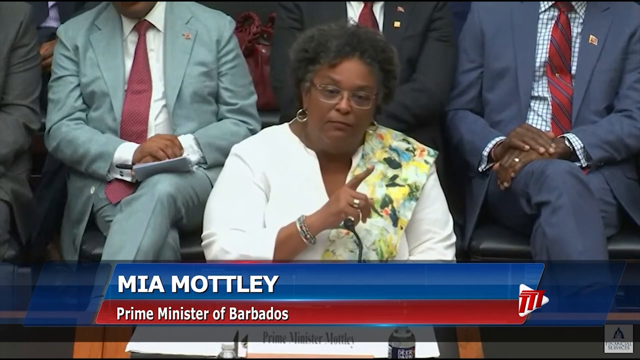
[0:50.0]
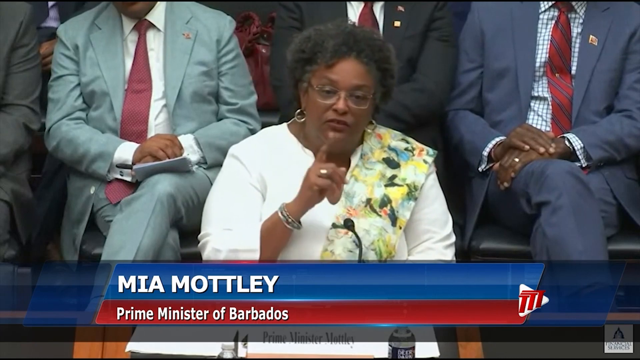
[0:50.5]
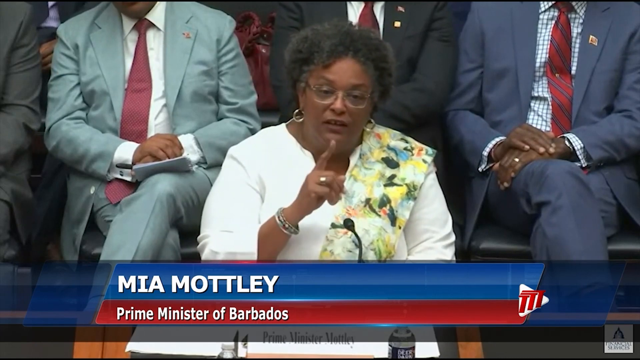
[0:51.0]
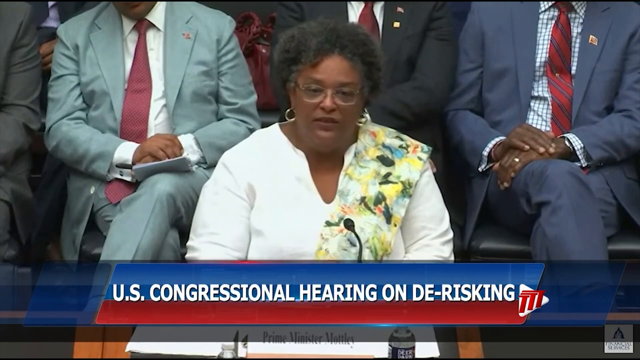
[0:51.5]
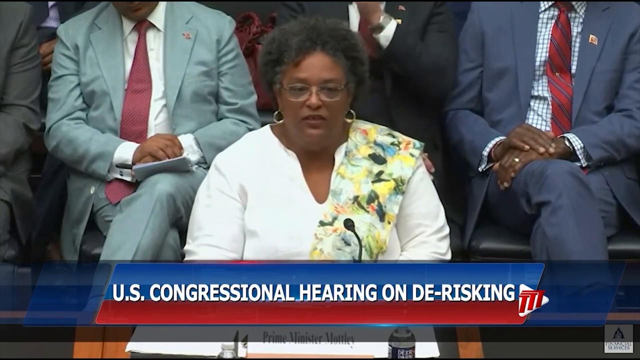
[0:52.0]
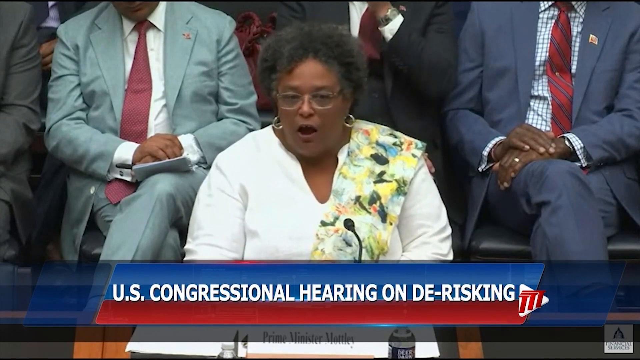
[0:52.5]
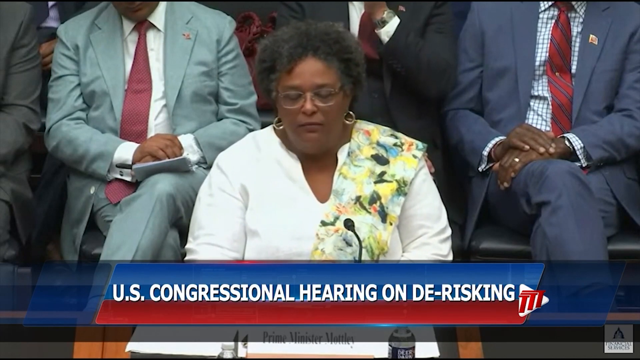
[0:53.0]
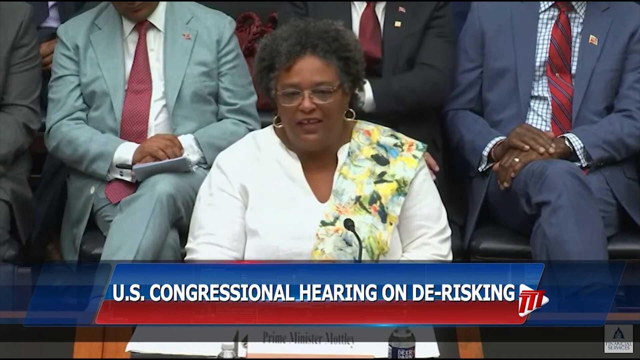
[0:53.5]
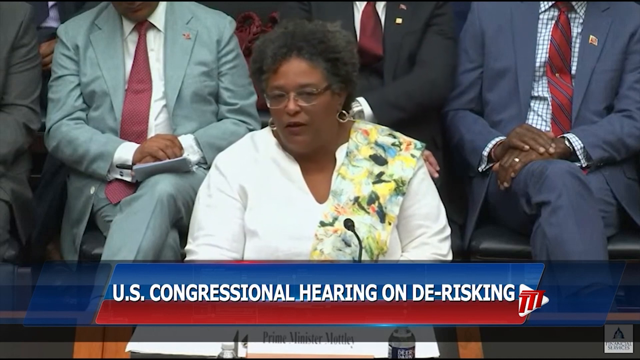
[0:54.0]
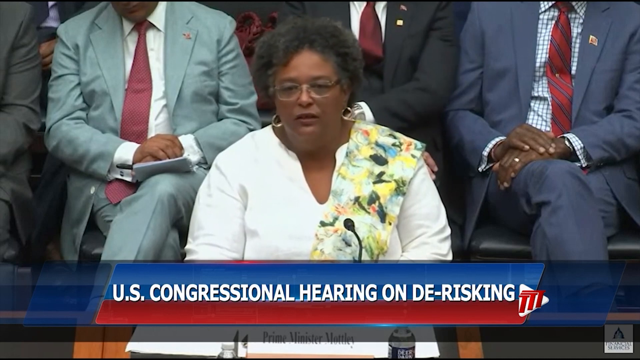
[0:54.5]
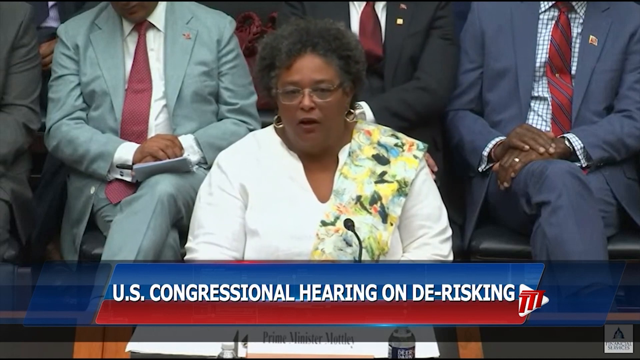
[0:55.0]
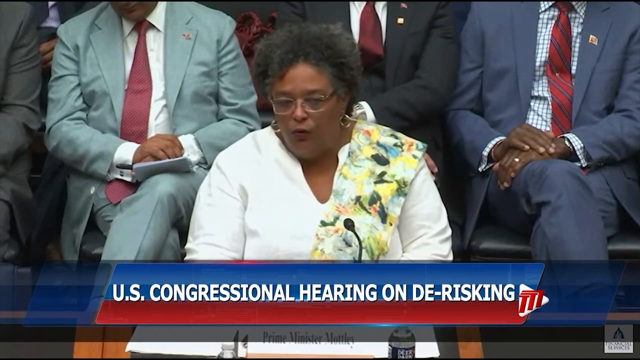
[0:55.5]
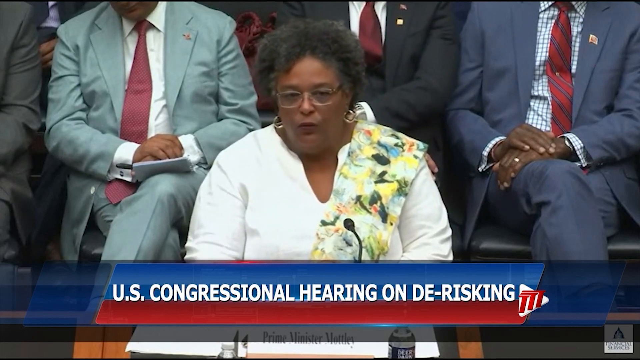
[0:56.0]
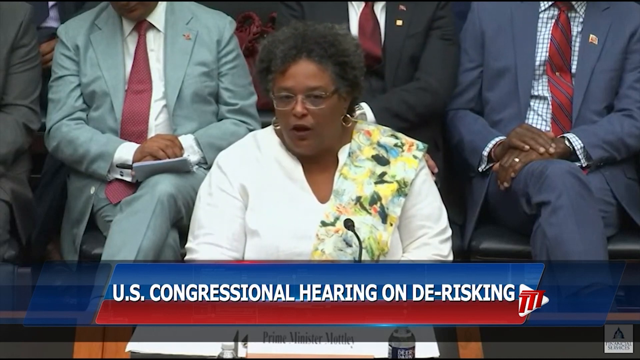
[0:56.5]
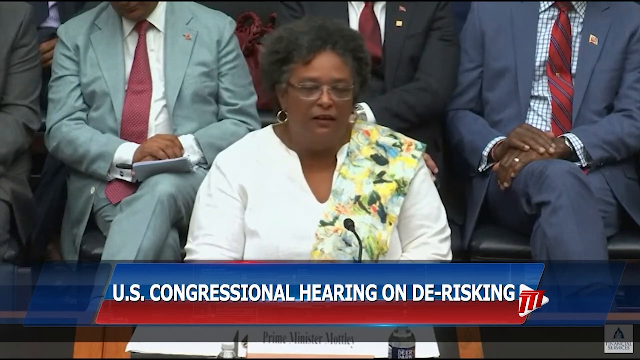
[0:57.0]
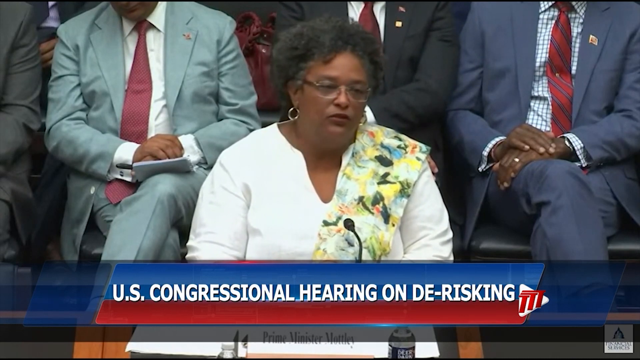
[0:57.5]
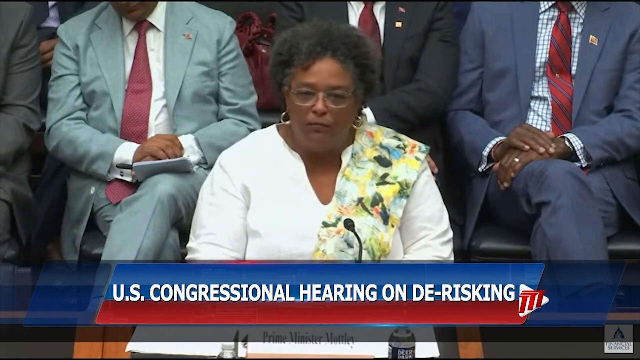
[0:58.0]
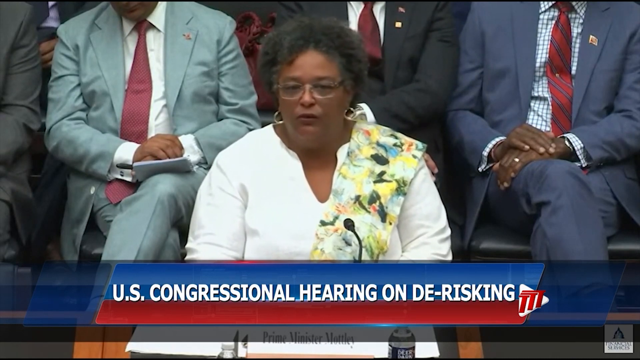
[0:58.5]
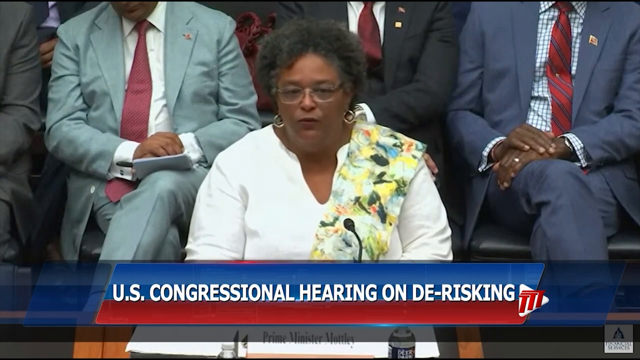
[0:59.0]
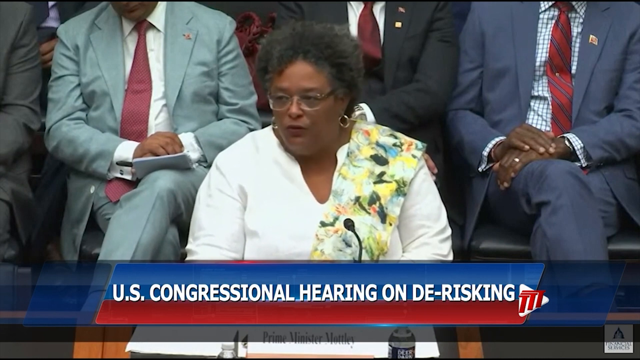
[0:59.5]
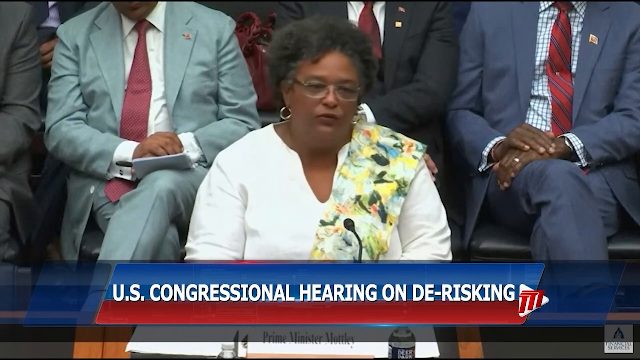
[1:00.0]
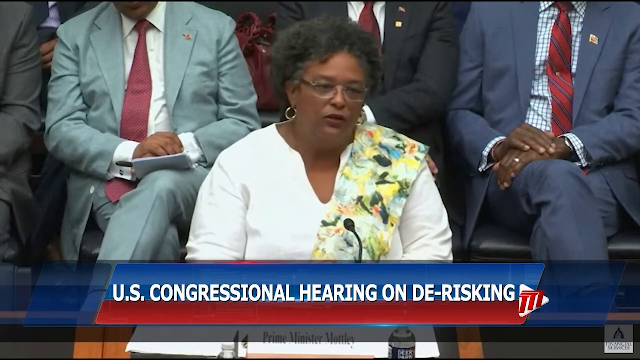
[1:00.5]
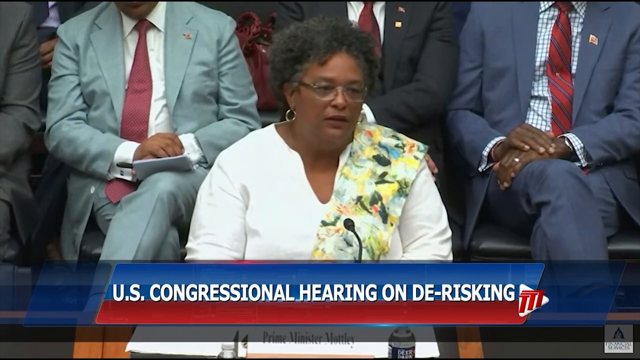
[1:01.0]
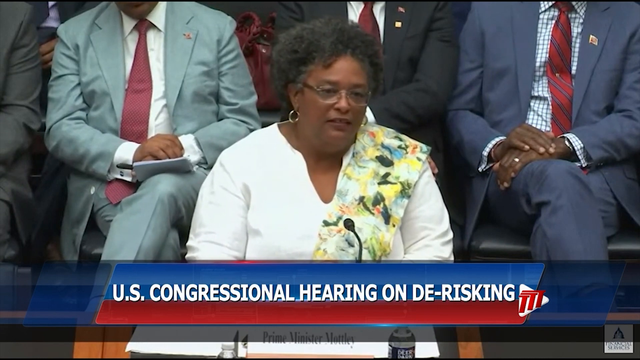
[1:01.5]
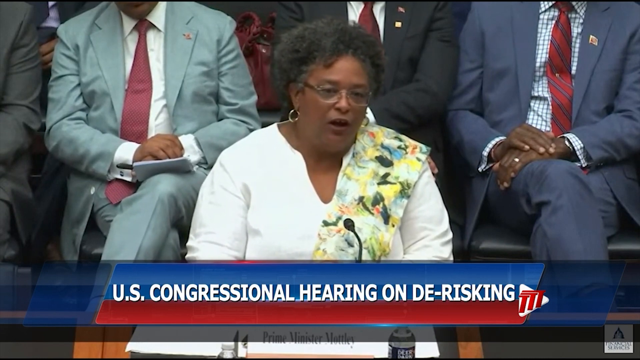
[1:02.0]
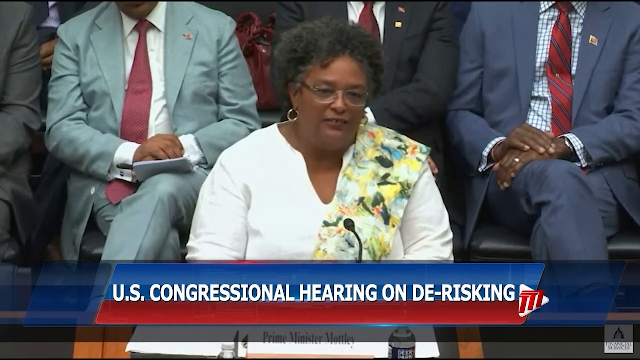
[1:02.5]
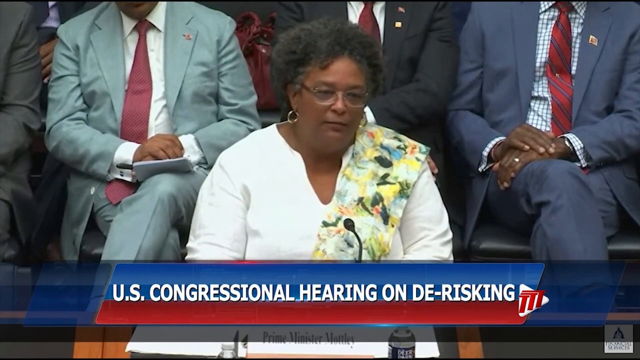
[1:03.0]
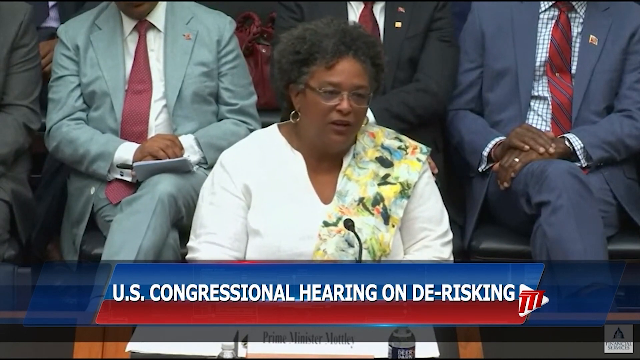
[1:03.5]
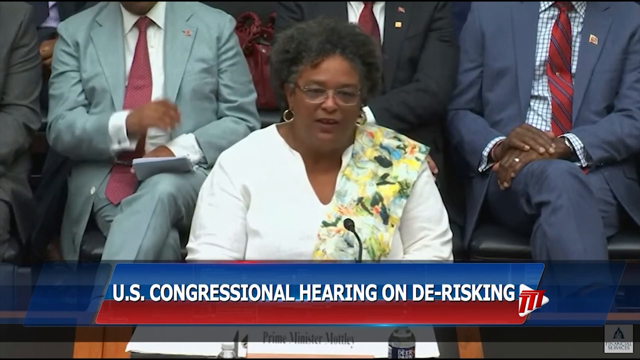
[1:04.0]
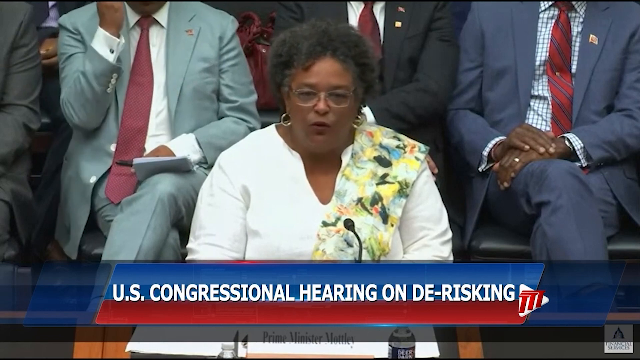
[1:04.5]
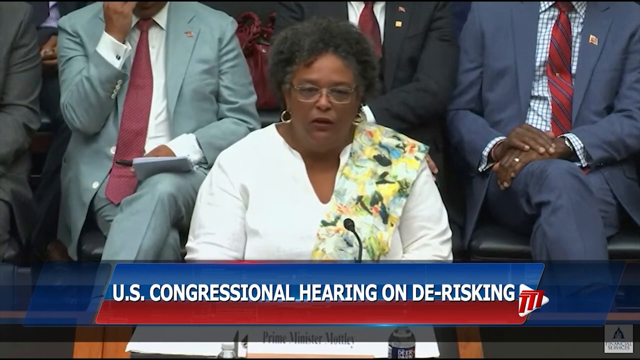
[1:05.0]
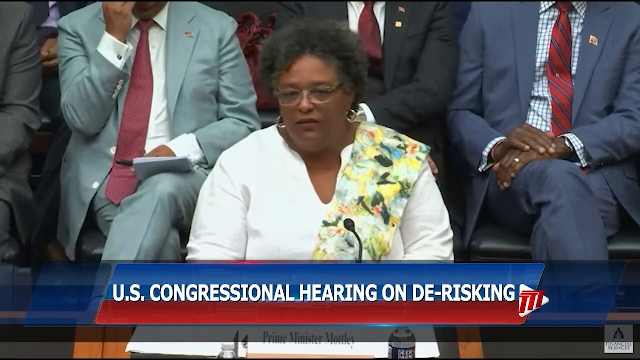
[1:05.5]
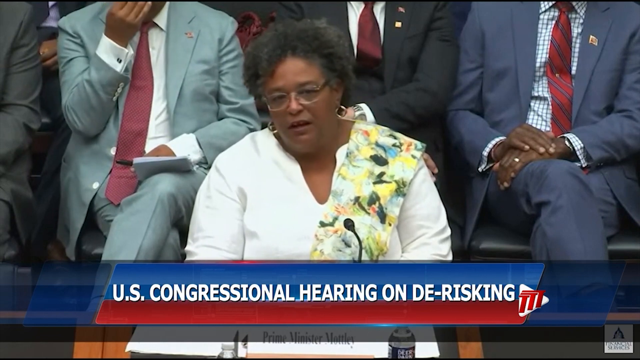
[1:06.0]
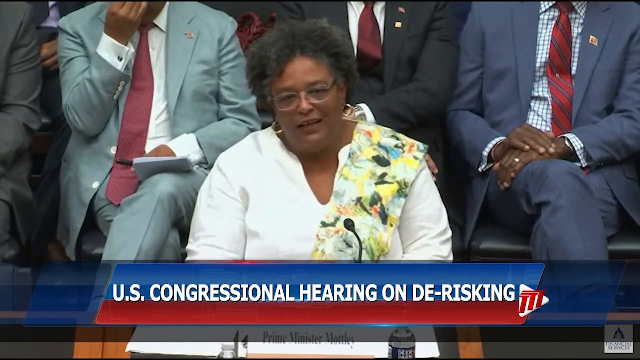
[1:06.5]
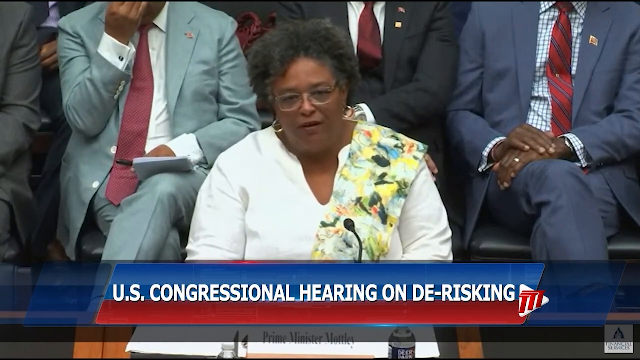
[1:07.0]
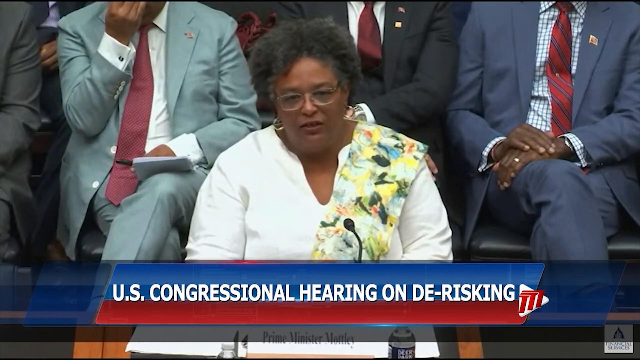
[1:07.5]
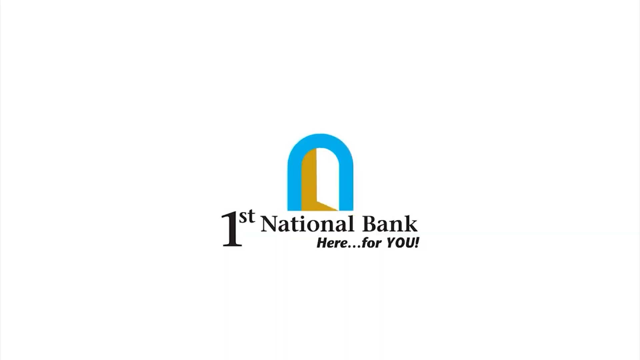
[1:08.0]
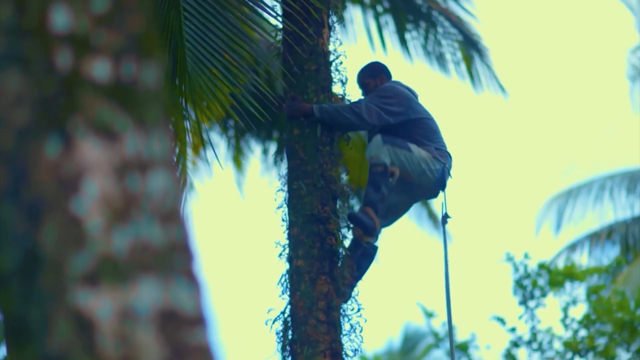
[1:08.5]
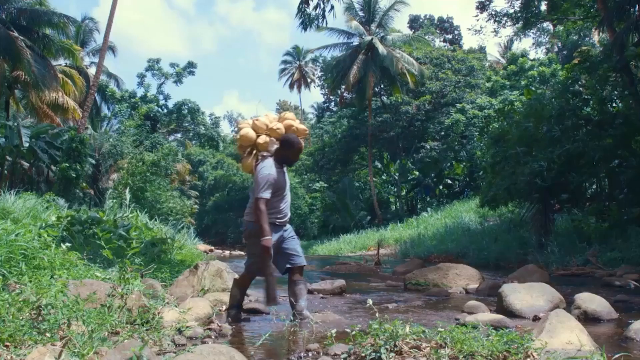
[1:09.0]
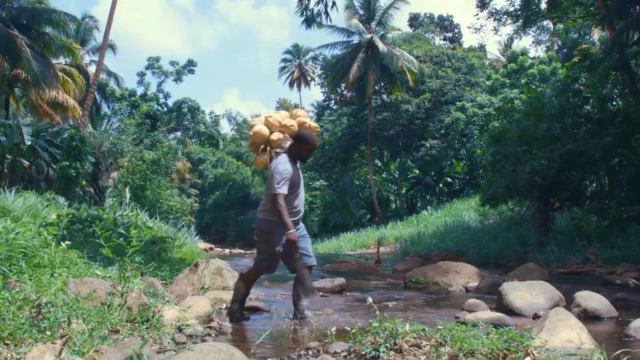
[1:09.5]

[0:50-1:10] The Prime Minister, apparently of the Bahamas, is shown, with text including the name Mia, possibly Motley, "U.S. Congressional" and "de-risking". She is the woman seen at the beginning of the video, wearing a white, off-white dress, with a shawl going over her left shoulder. She is talking, and there are people behind her and dark-colored benches, possibly reddish-brown. The video then shows a dark-skinned man, possibly a local produce seller, holding some type of fruit or vegetable over his shoulder. He wears rain boots and is walking through a stream.